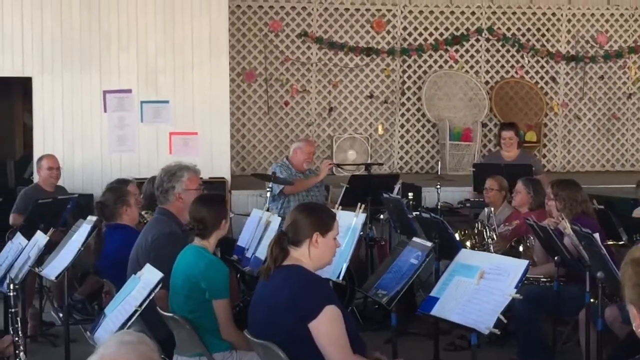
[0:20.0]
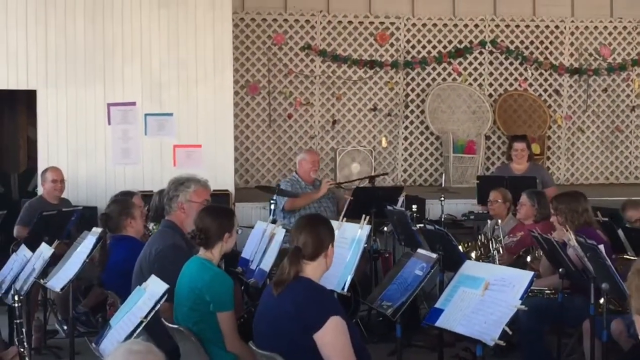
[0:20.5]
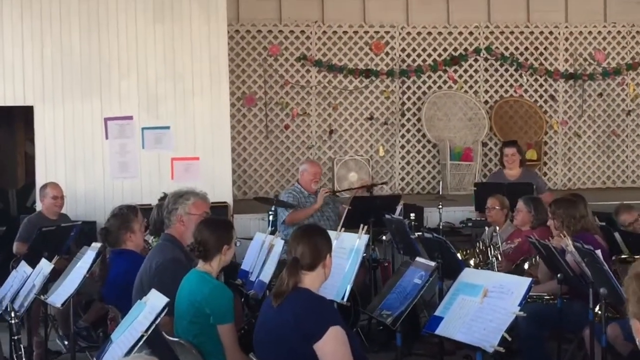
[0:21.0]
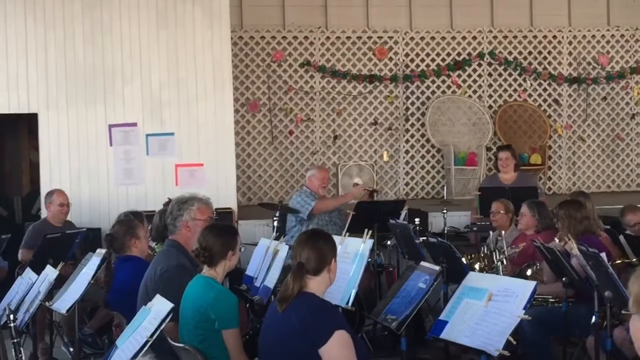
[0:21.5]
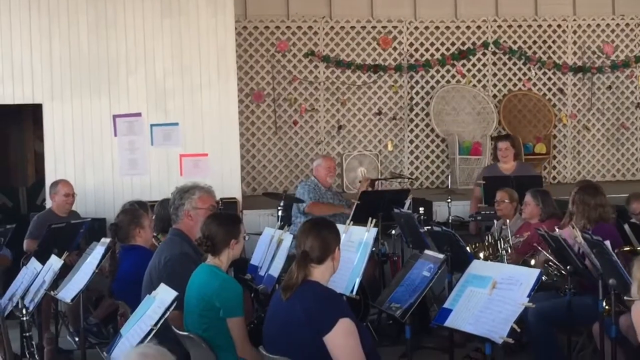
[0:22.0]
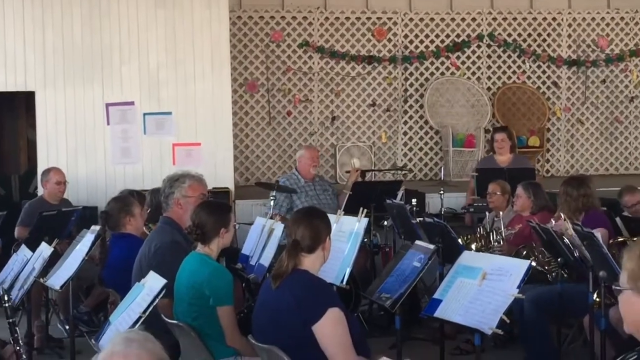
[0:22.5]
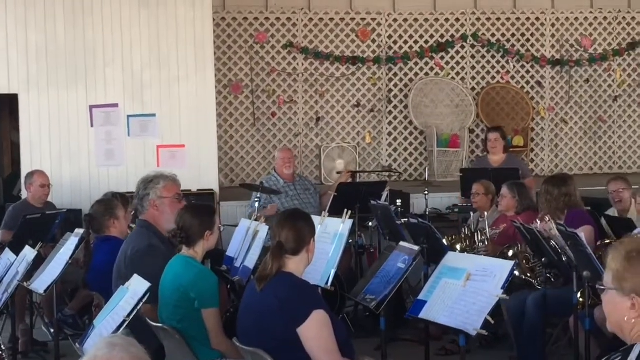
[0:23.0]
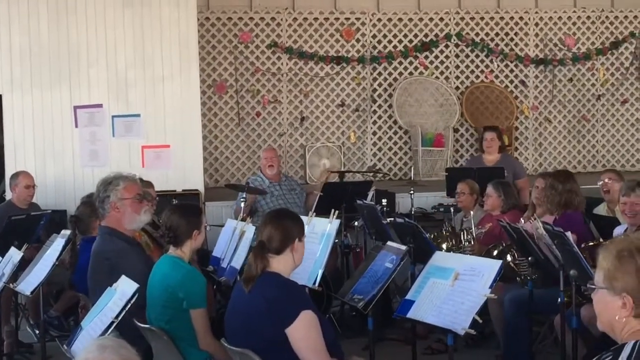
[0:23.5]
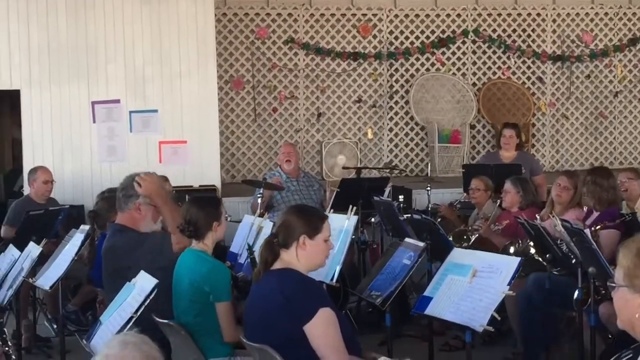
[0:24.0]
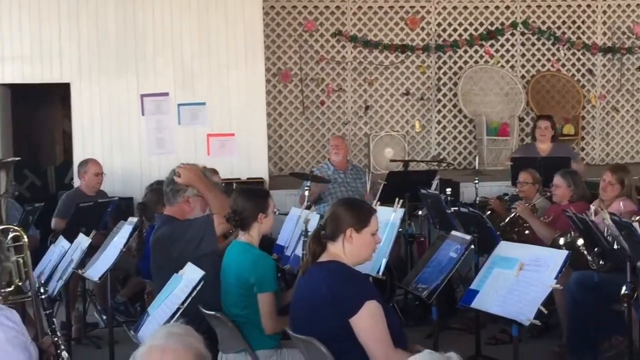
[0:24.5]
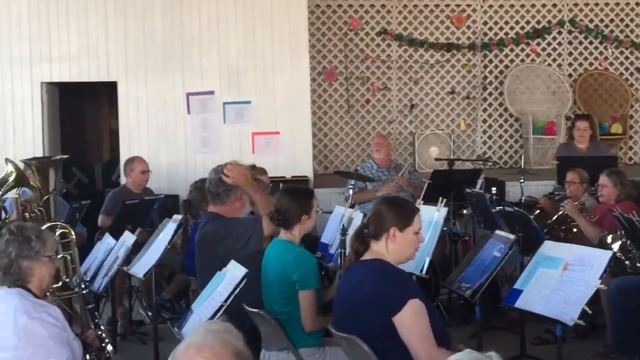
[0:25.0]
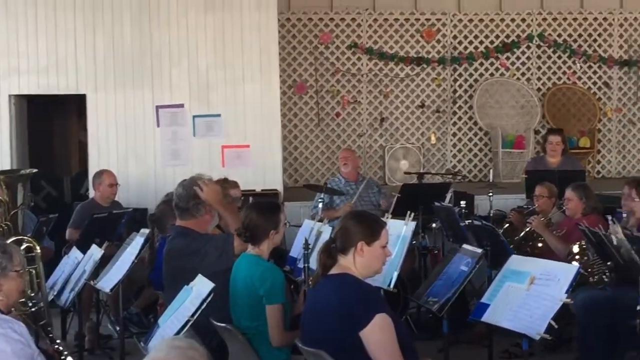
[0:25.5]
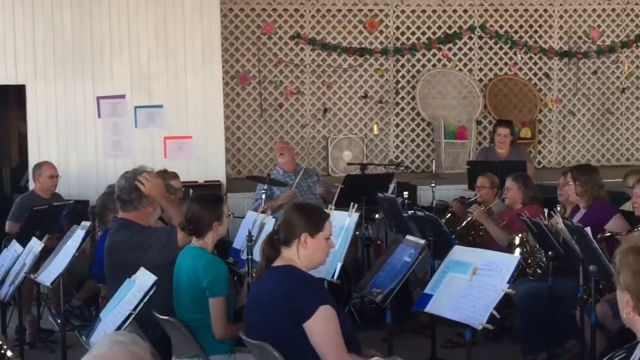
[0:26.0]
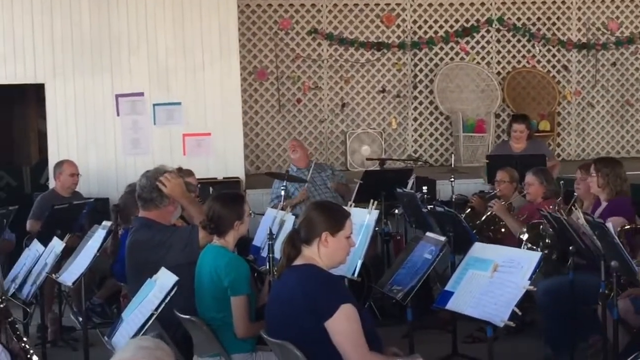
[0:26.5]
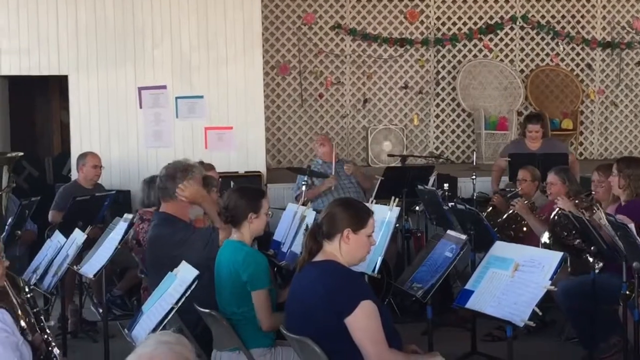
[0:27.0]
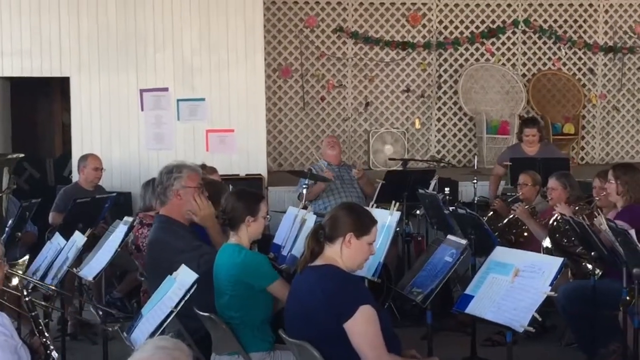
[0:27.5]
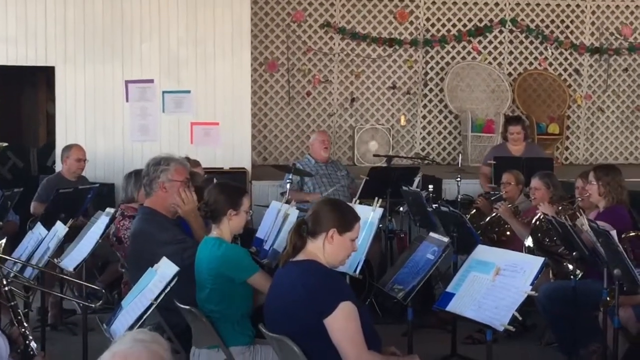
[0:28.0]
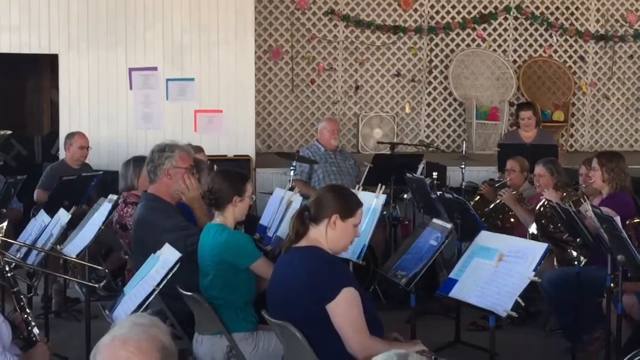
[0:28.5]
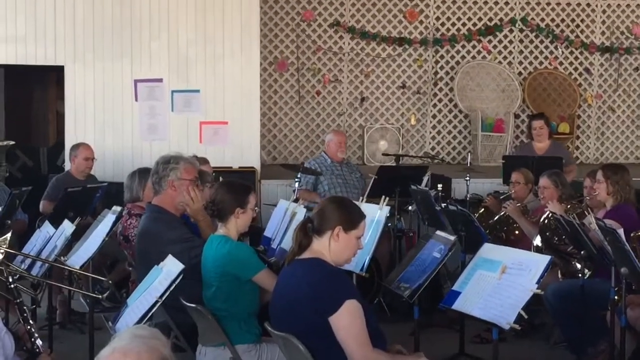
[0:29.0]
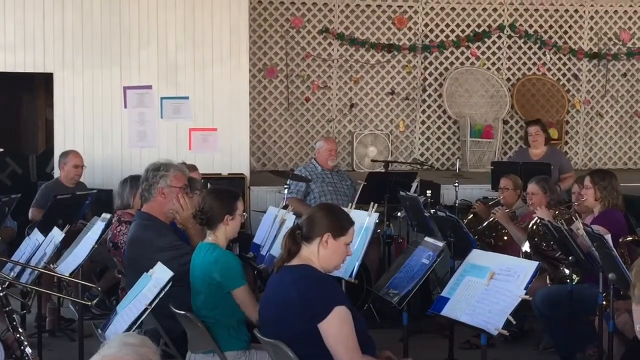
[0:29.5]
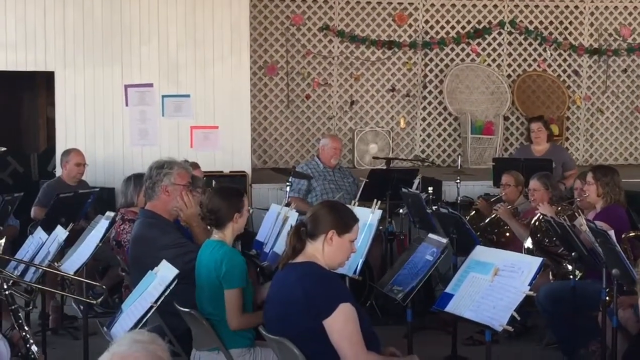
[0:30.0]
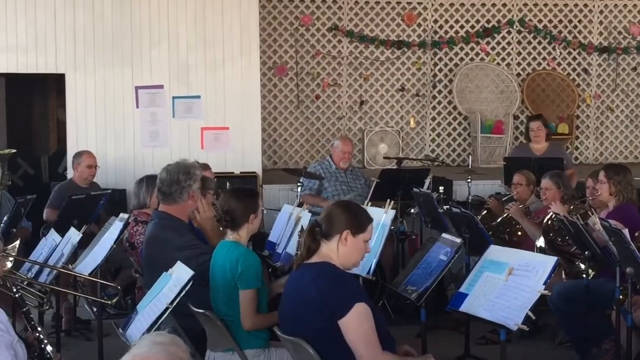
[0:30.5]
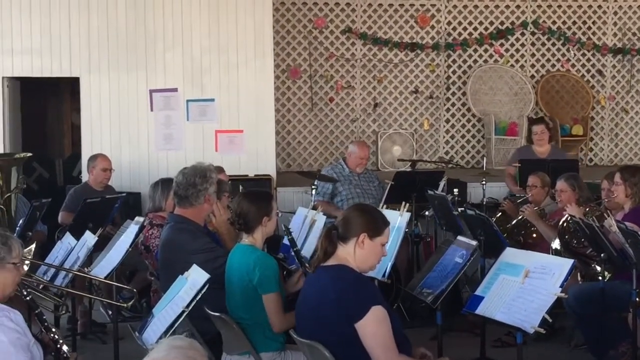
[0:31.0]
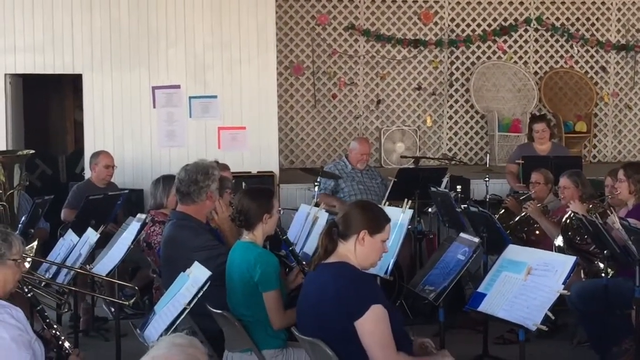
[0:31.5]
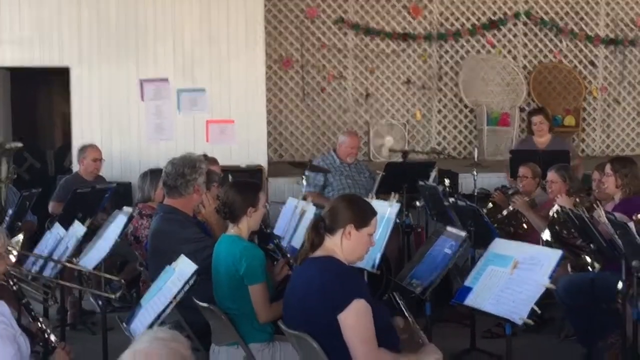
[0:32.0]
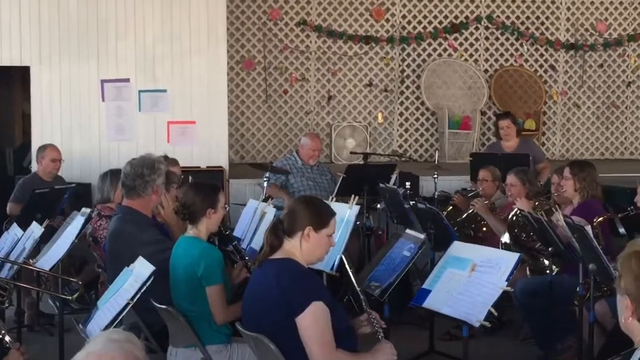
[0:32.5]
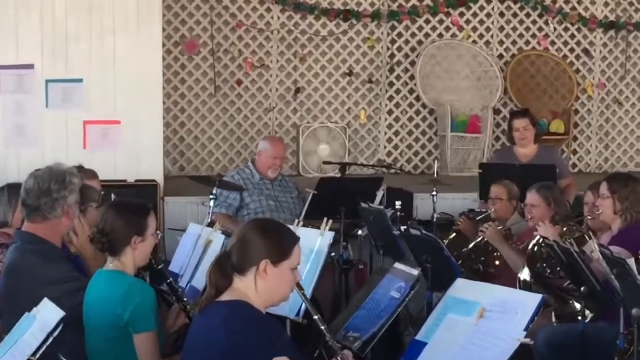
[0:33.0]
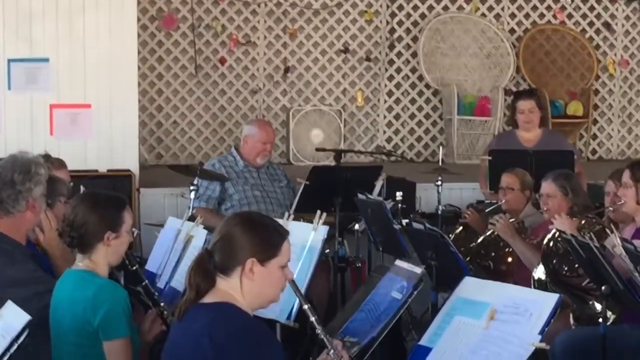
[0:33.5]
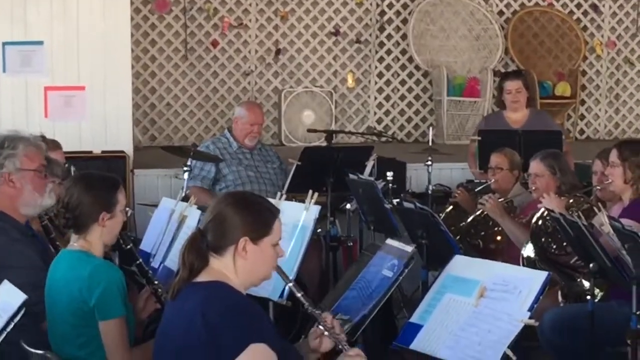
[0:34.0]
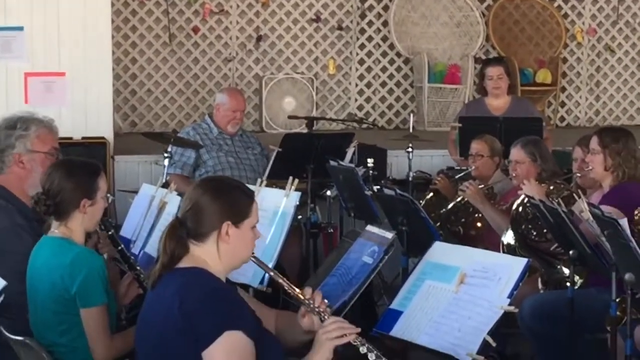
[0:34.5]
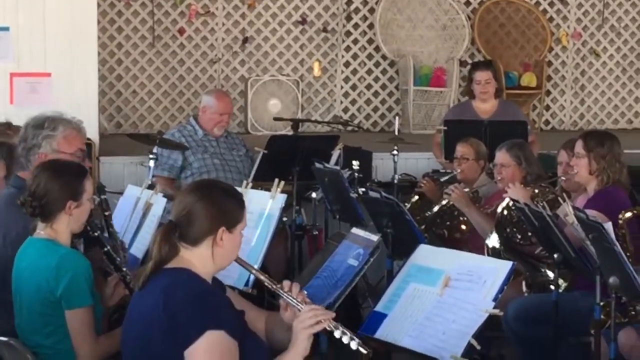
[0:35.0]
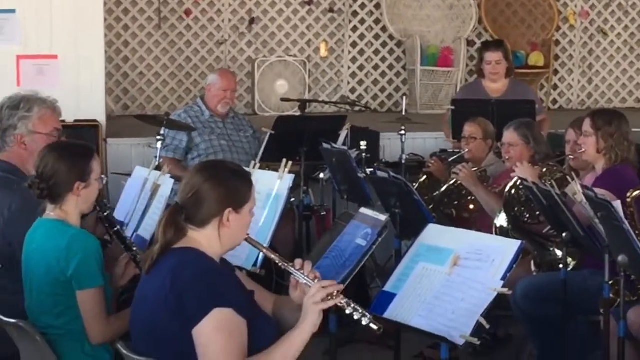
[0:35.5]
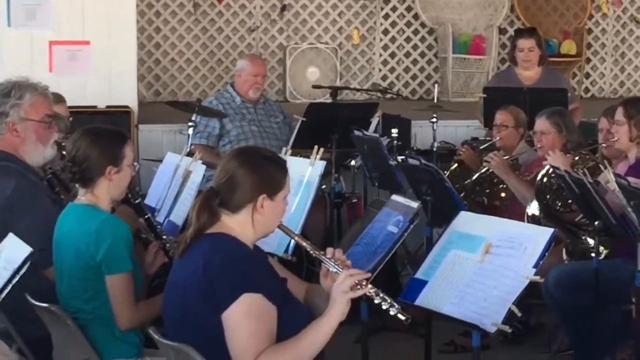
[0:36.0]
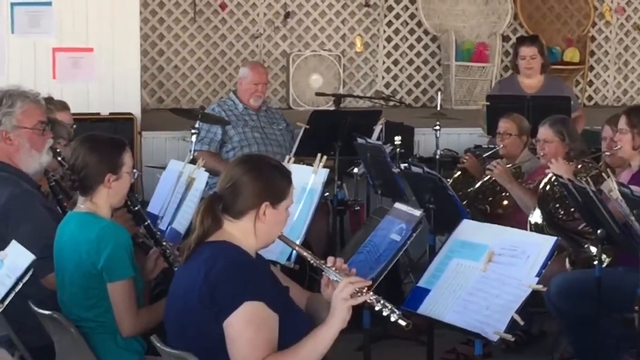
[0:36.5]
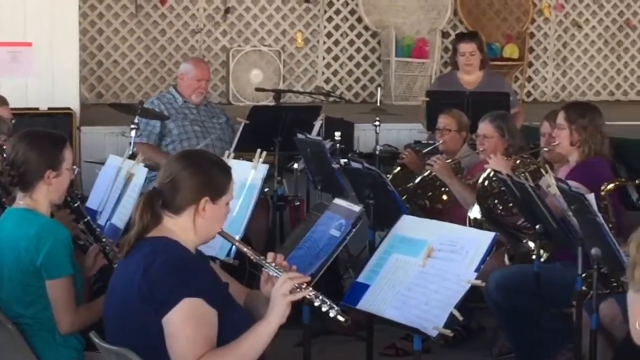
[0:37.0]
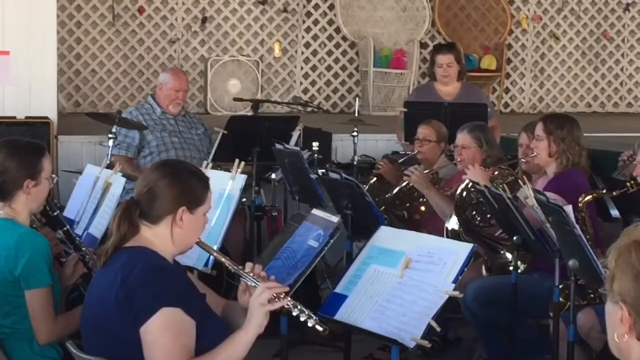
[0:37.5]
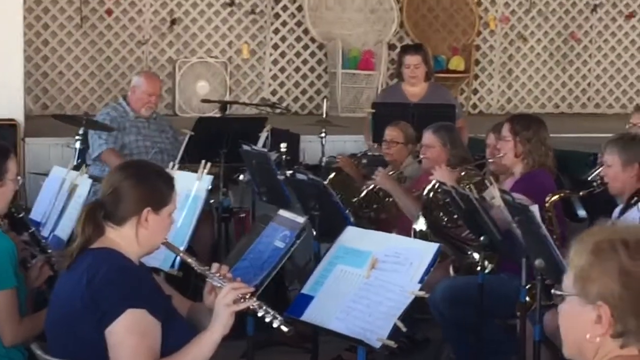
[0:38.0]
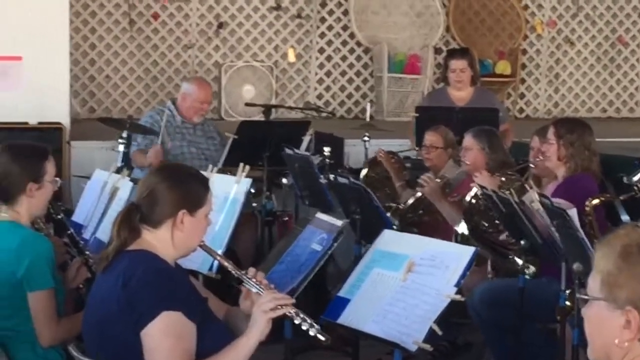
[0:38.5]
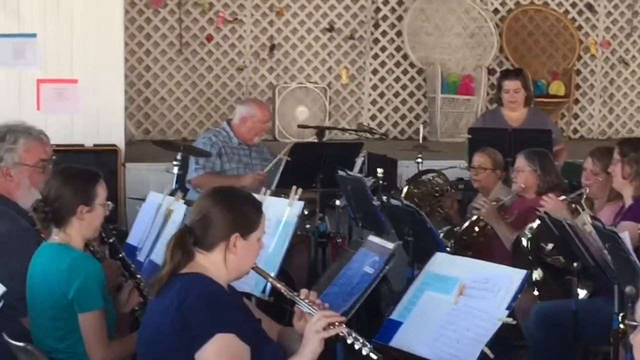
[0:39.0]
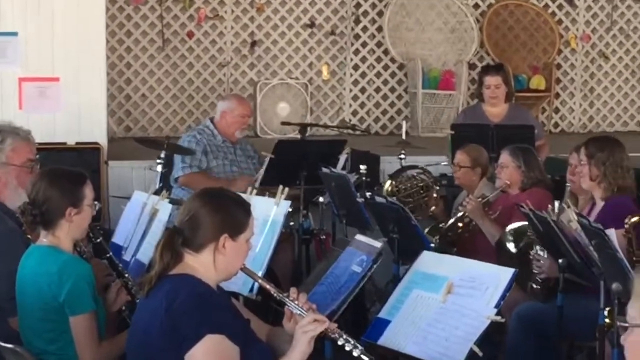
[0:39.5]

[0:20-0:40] The man in the blue and white shirt continues to either sing or talk into his microphone. He then moves the microphone away from his mouth, and the conductor smiles as he does so. He then speaks to the band without the microphone. He seems to be holding a drumstick in his right hand, so he may be a drummer. A cymbal is visible around his right shoulder, but because of the distance and other musicians obscuring the view, the drum set itself cannot be seen. He is placed right in front of the band, near the conductor.